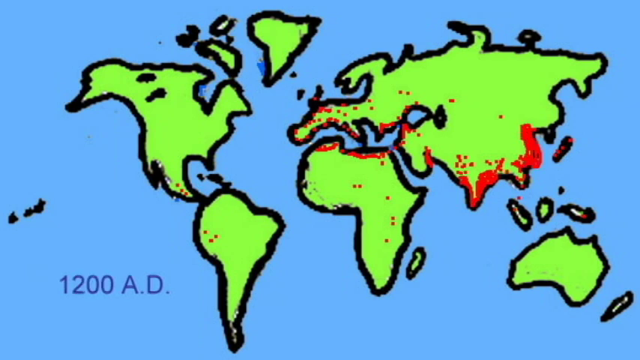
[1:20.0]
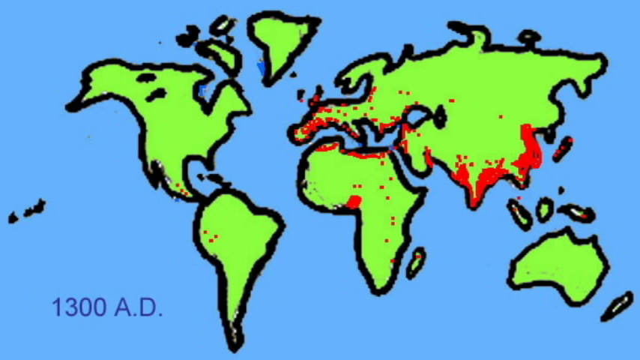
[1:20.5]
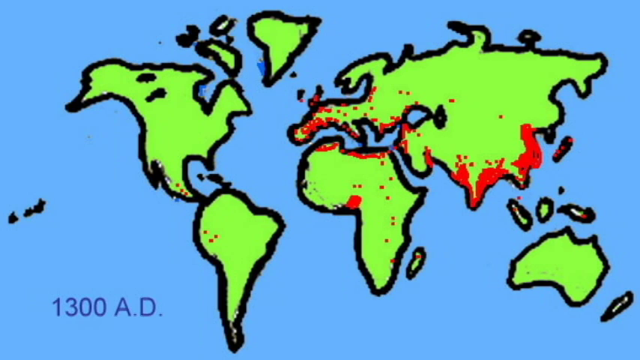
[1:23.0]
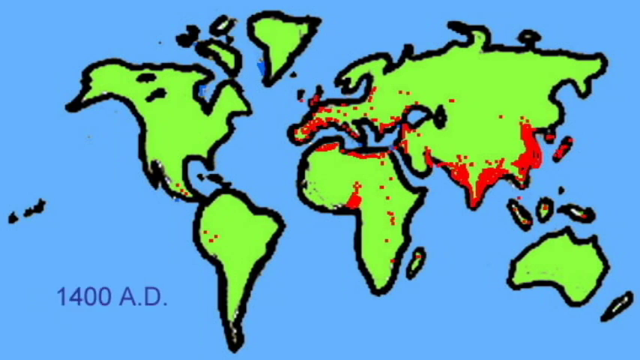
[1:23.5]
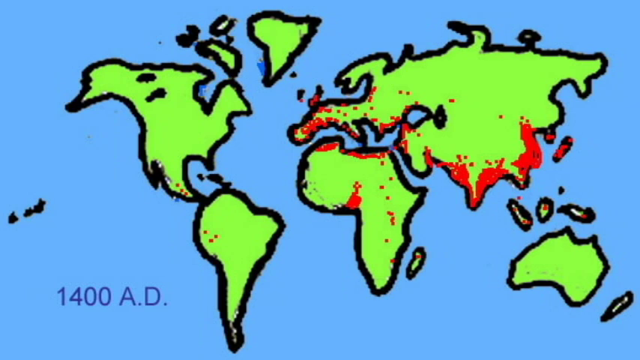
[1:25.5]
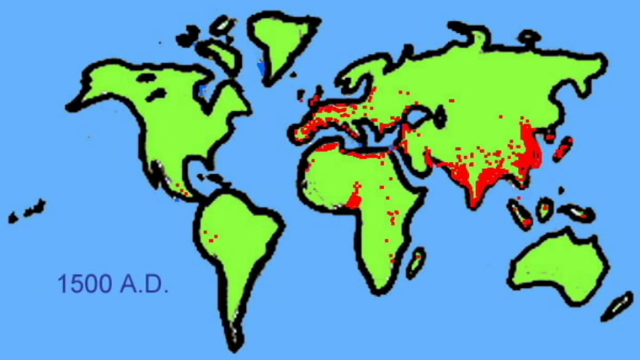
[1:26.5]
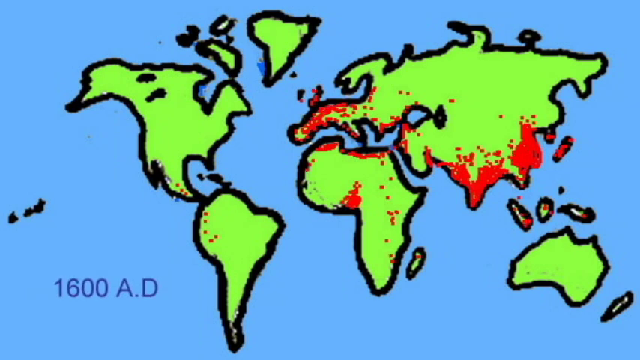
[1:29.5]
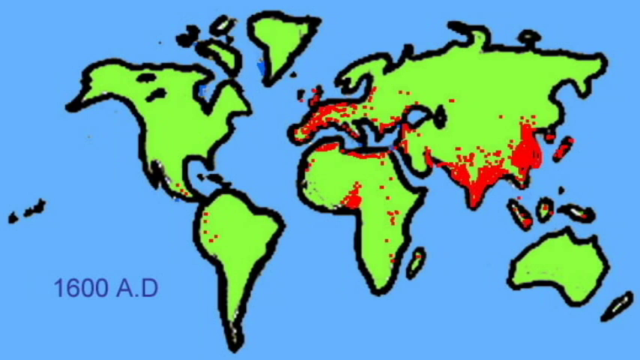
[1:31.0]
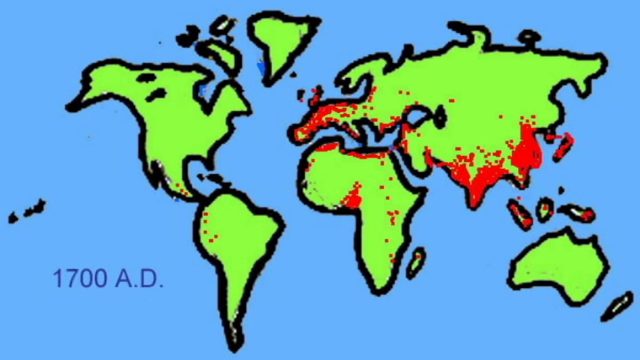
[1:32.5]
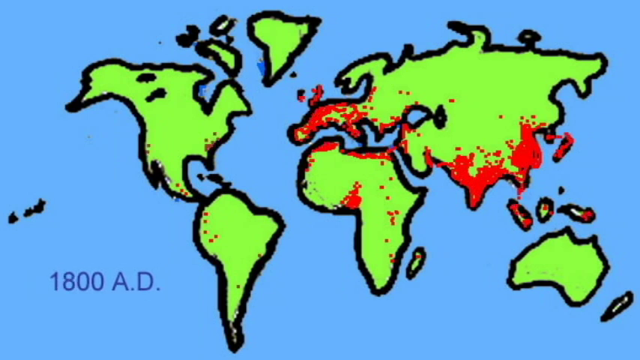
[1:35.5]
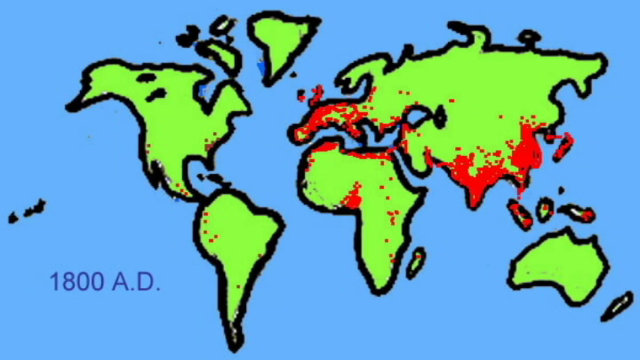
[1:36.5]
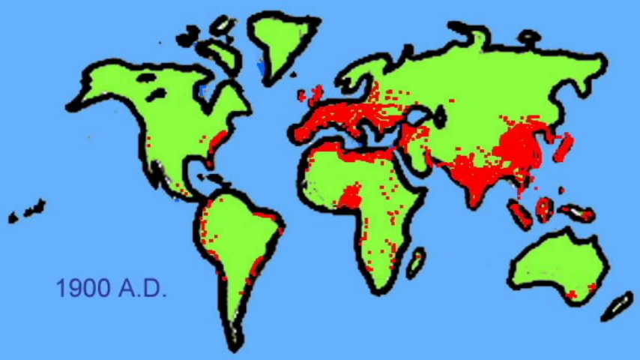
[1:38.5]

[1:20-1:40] The digital map continues to show the concentration of the human population. The dots are clearly situated along the borders of the continents where the water is, in the coastal areas, while the interior parts of the continents have no dots or only one or two. Some of the islands, such as Madagascar and some near Asia, also have a high concentration of dots. Greenland still has few, and North America and South America are still the least densely populated. The Middle East gets more and more dots until it is totally red, the bottom of Asia becomes totally red, and the top of Africa fills out.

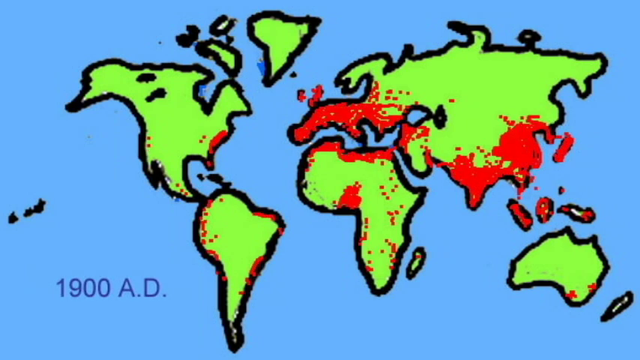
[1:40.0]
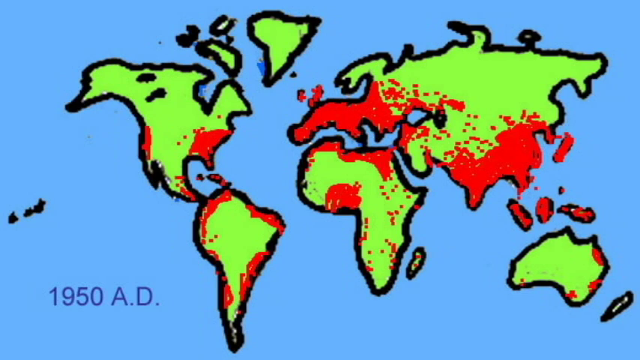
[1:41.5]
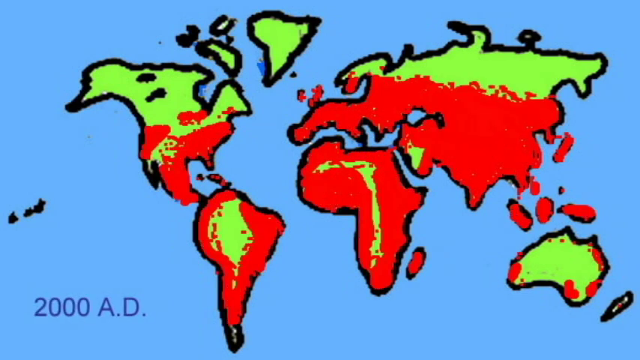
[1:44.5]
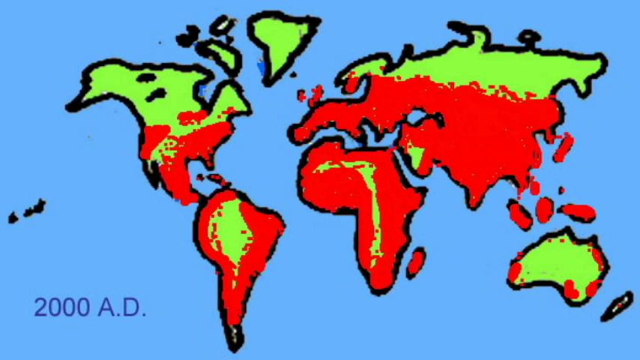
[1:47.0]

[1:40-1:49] The map reaches 2000 AD, and most of the world is covered. Asia and the Middle East are completely covered except for Russia. Almost all of Africa is covered except for an interior portion, and the same is true of South America. Almost all of North America is covered except for a couple of states out by California. Canada and Alaska are bare, and Greenland is still bare. Australia apparently still has only some specks in the coastal areas. Most of the islands on the map are completely red.